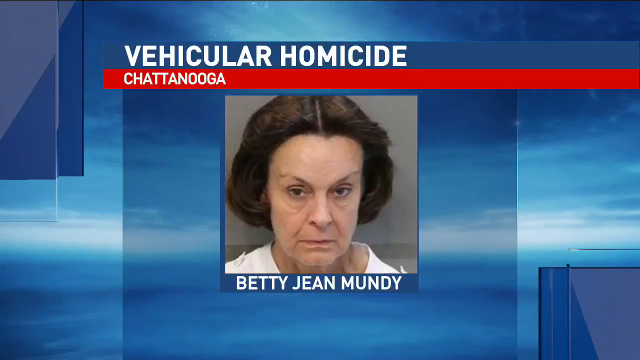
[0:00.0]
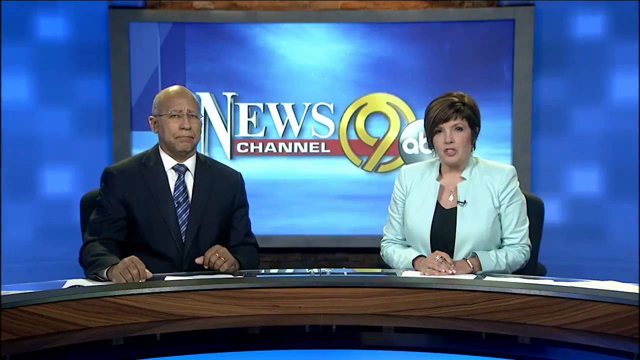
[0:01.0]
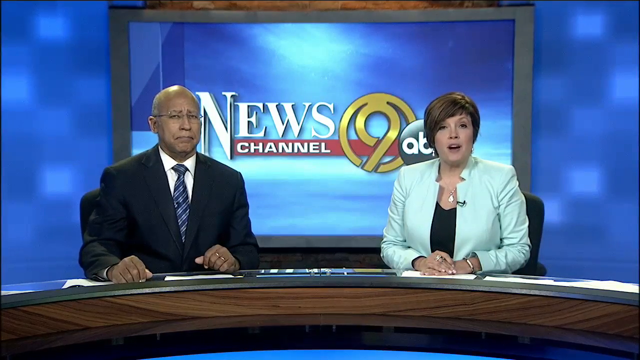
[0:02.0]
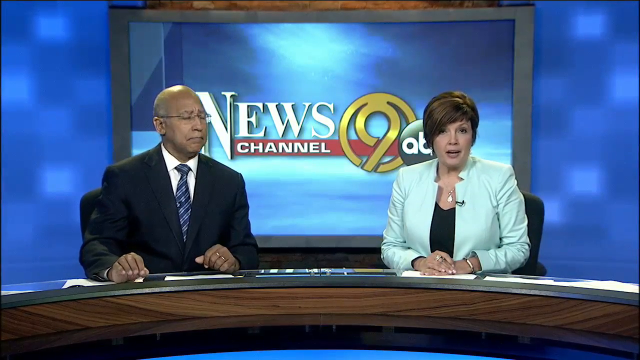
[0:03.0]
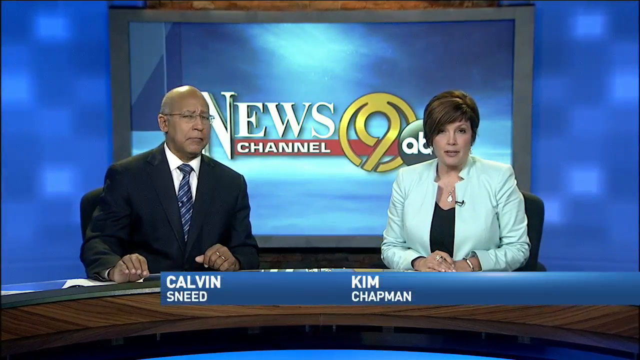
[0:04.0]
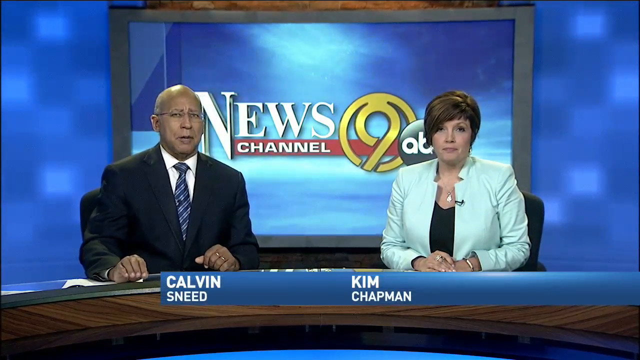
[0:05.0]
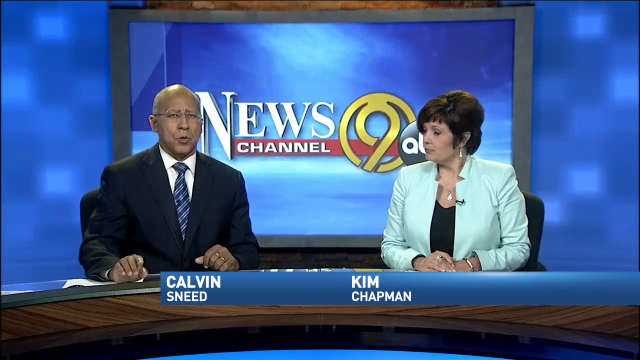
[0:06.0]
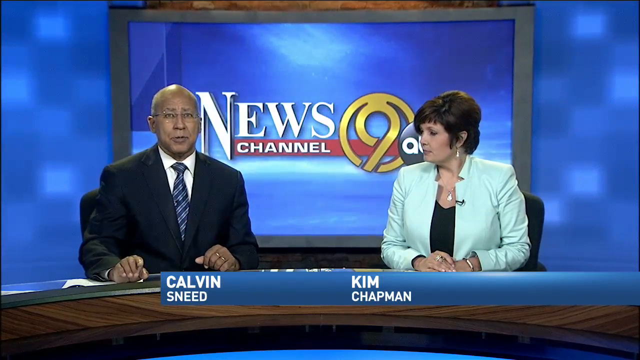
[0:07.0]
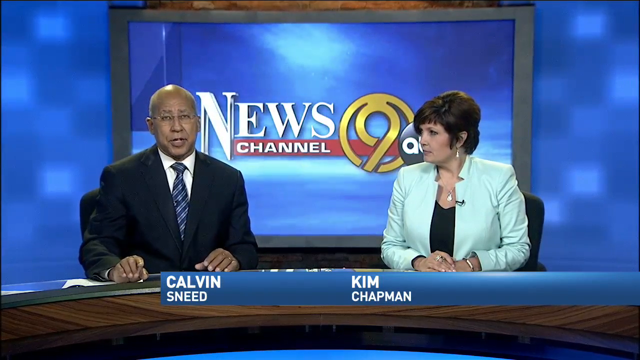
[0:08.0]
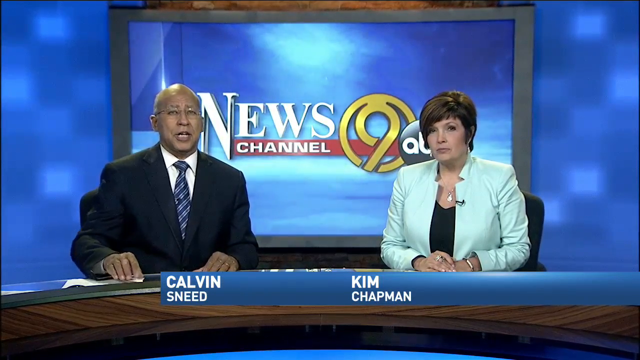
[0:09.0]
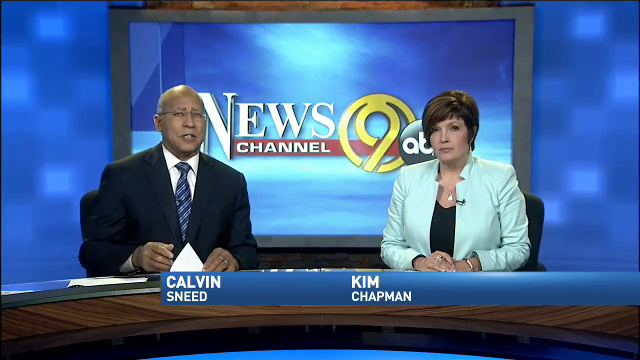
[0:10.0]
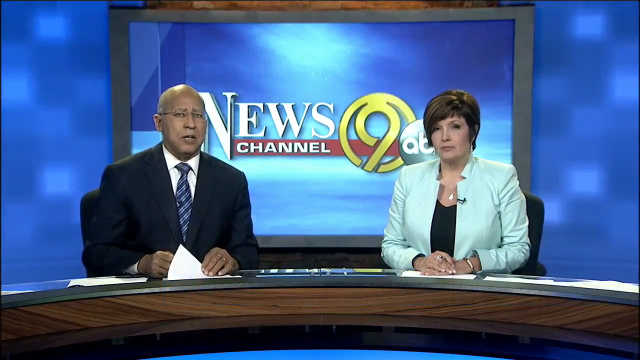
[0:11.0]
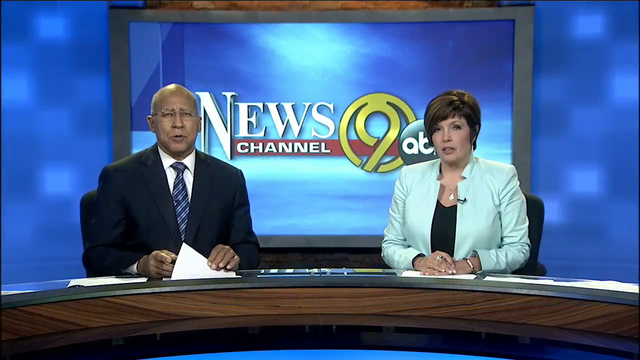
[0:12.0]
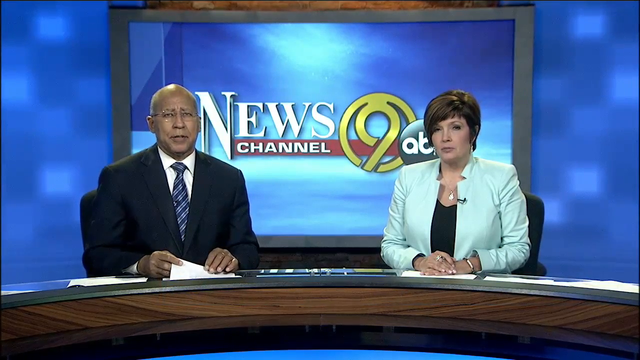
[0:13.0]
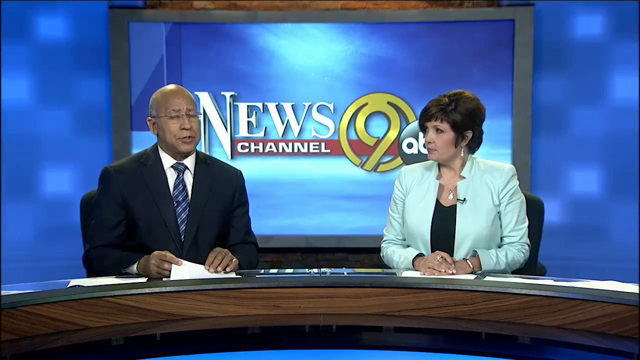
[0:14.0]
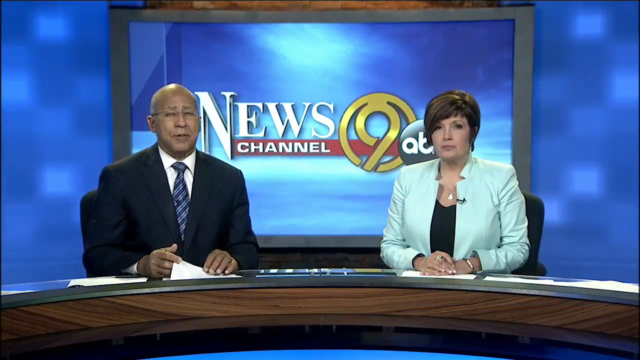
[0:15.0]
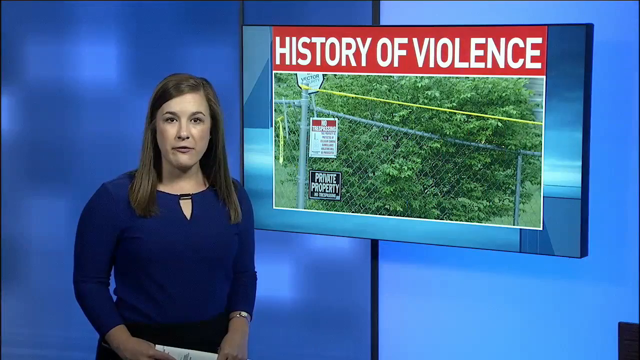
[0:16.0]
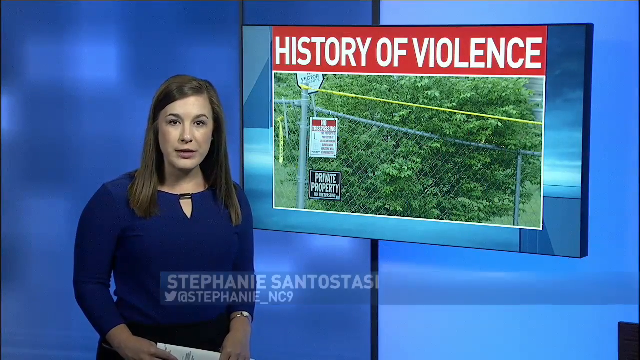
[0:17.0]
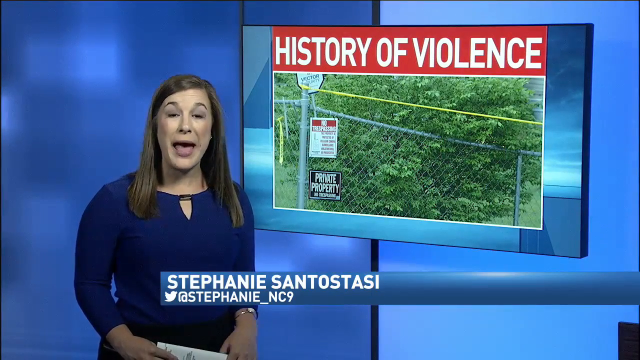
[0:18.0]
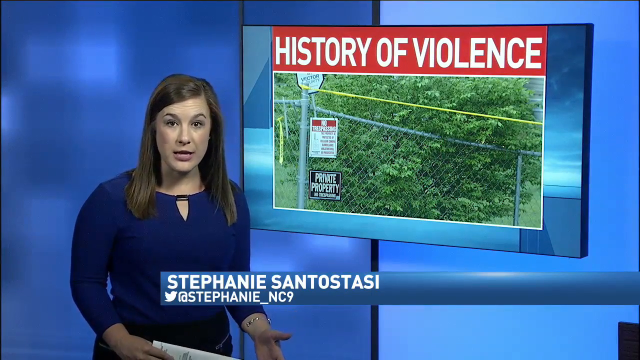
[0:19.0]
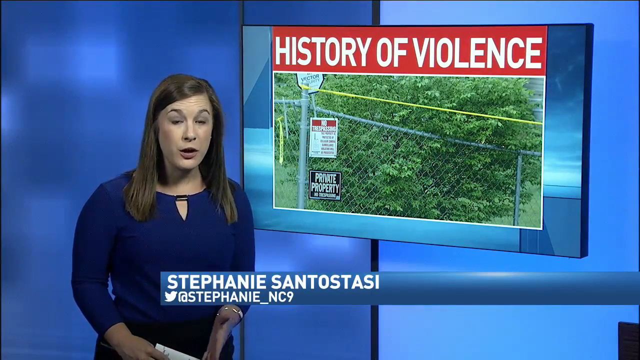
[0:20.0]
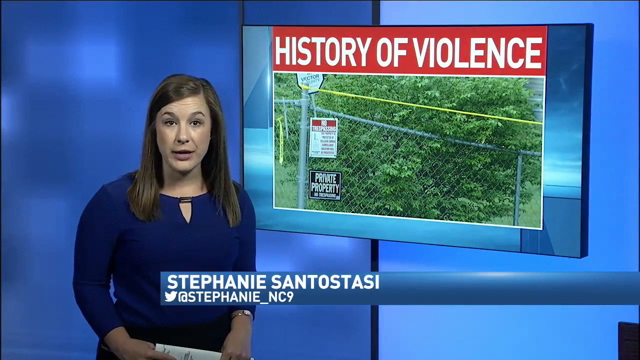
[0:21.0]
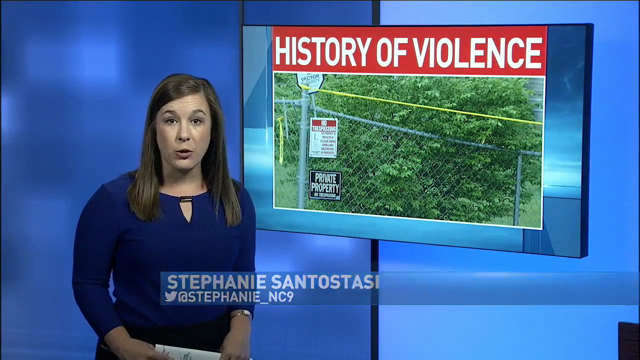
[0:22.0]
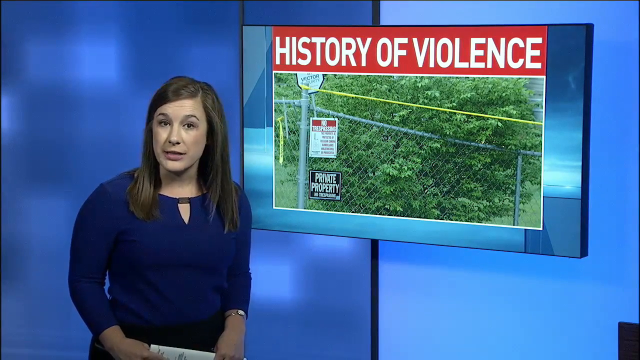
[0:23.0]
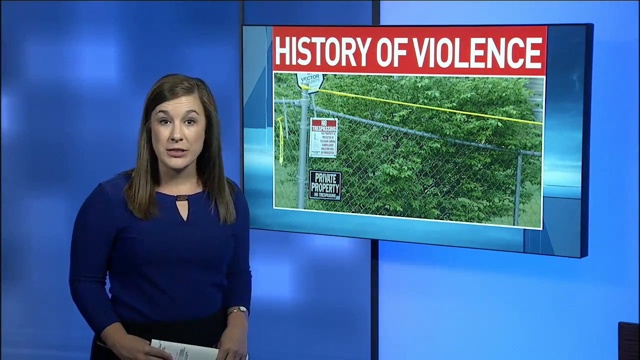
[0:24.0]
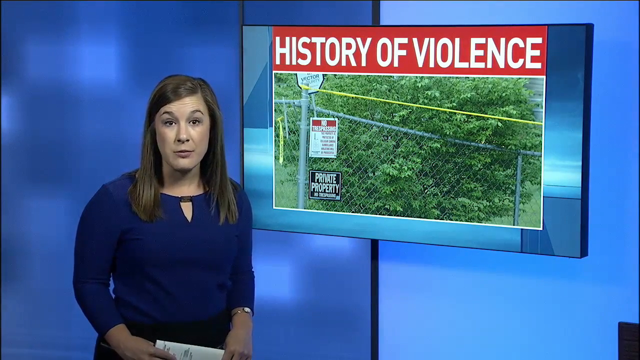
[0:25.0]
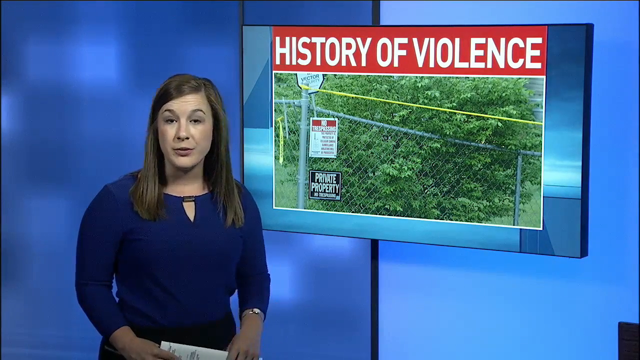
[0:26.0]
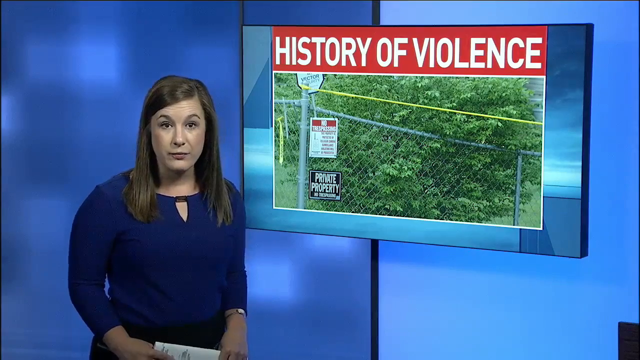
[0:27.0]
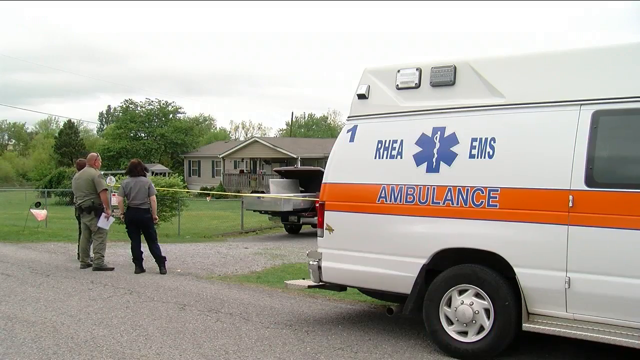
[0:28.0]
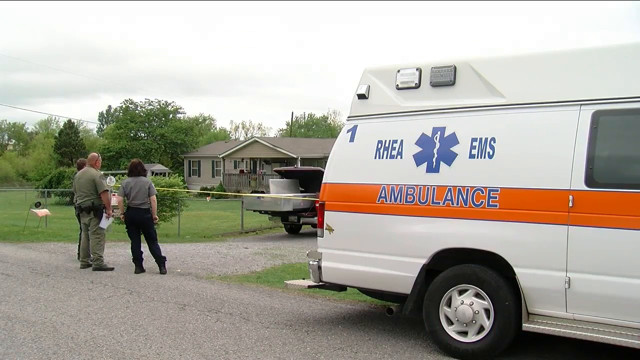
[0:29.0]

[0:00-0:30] The video opens on what appears to be a sky background with overlays of dark blue squares. A text overlay reads "vehicular homicide" and then "Chattanooga". A mugshot shows a woman named Betty Jean Mundy, who looks to be in her late 50s or 60s. The scene switches to a News Channel 2 ABC logo in the background on a framed screen, with blurry blue square backgrounds to the left and right. Two presenters are at a curved desk: a bald man with slightly tanned skin in a black suit, white shirt and blue and black striped tie, and next to him a woman with shortish brown hair, a white jacket and a black top, who also wears a metallic necklace and bracelet. The woman talks first, and the bald man turns his head while she speaks. He then turns his head to face the screen and starts to talk, moving his hands slightly while they stay in roughly the same position, and he fiddles with a piece of paper as he talks. The woman turns her head to look at him briefly and then turns back to face the audience. The scene changes to a younger woman, likely in her 30s, with long brown hair and a blue top. Next to her is an image that says "history of violence", showing a tree and a metal fence that says "private property". As she talks, her name, "Stephanie Santostasi", appears at the bottom on a blue overlay. She talks for a while with a lot of expression in her head, sometimes nodding, and raises her hand once. The scene switches to a white ambulance on the right with an orange strip, the word "ambulance" in blue and the ambulance logo in blue. On the left are three people who are apparently medical staff: a woman with black hair, a larger man in green, and another person whose clothing is unclear because they are standing behind the other man. There is a small single-floor home, green with a darker roof, with a yard in front and trees in the background. A man in green puts some clothes on the fence.